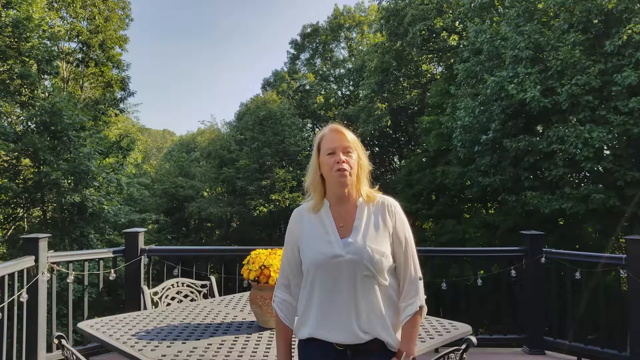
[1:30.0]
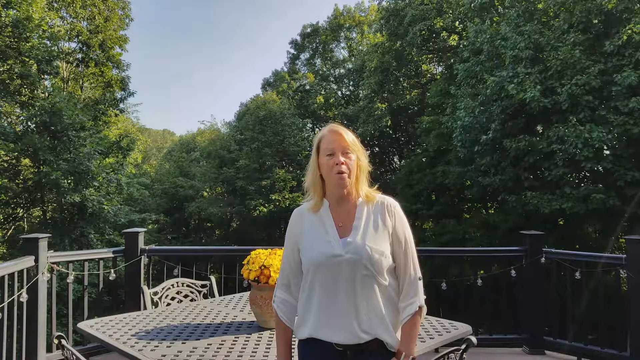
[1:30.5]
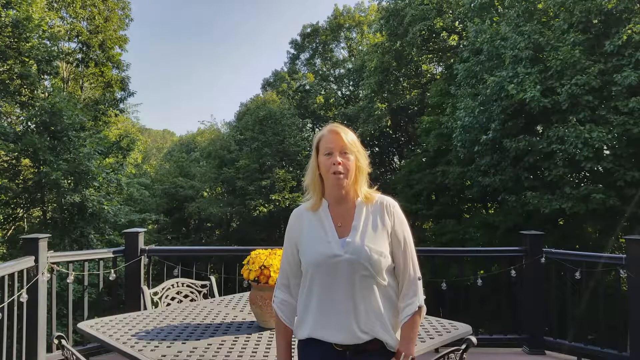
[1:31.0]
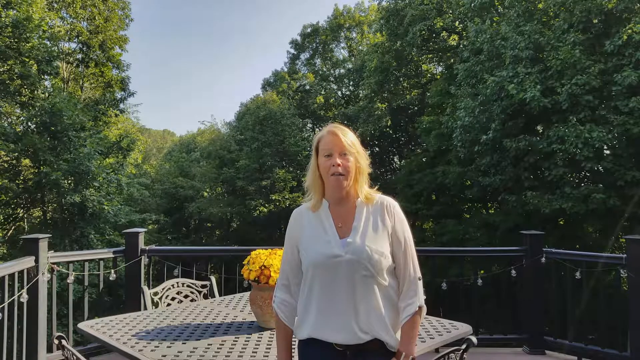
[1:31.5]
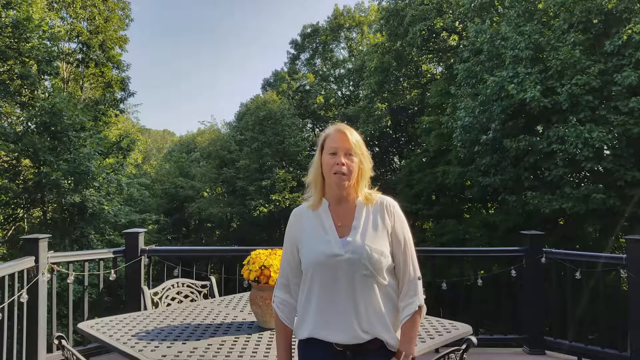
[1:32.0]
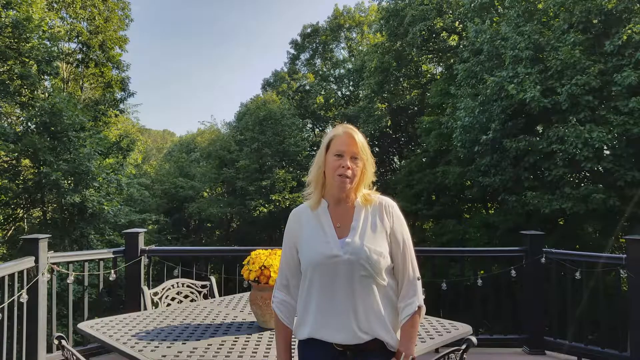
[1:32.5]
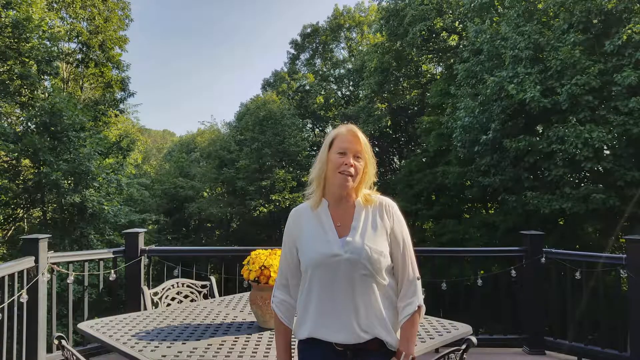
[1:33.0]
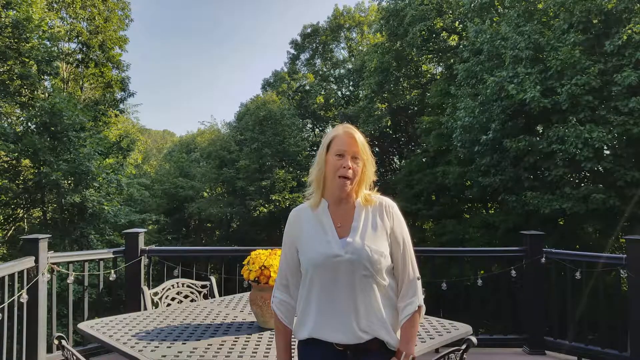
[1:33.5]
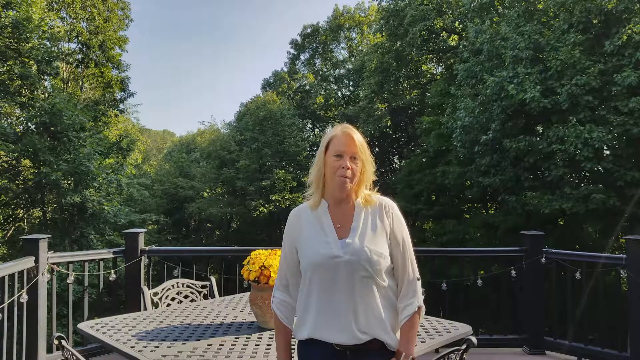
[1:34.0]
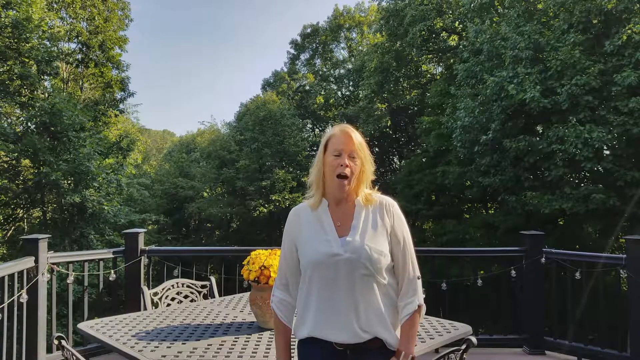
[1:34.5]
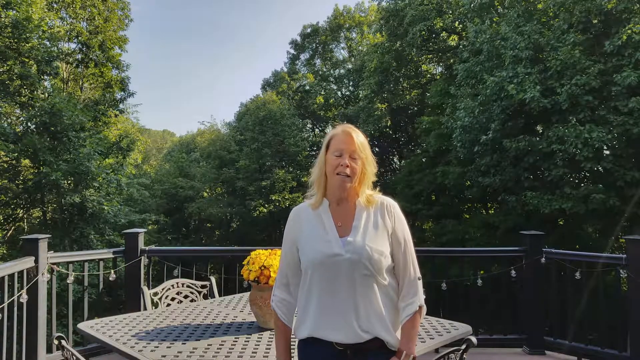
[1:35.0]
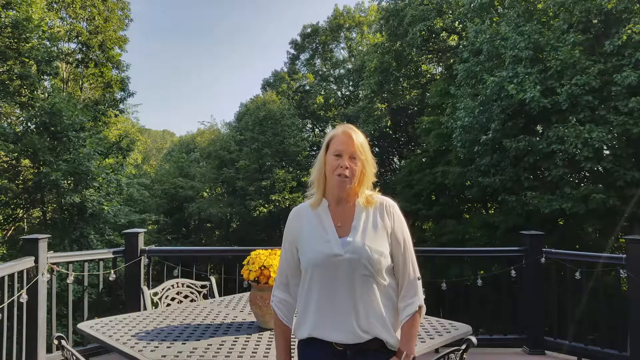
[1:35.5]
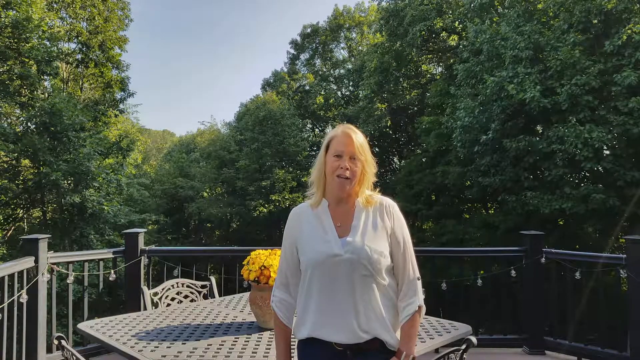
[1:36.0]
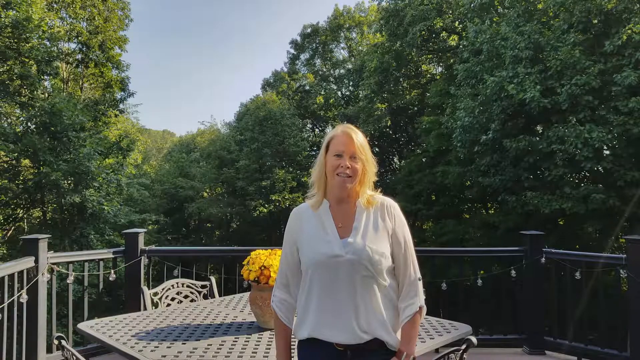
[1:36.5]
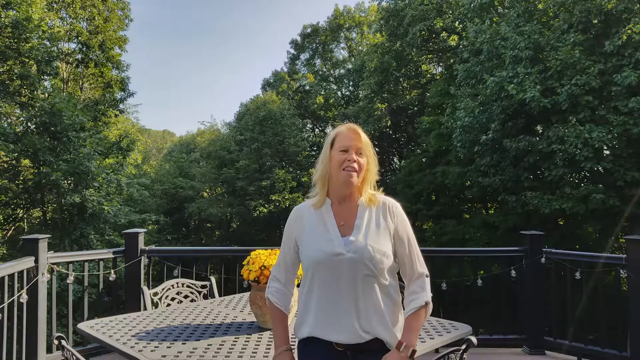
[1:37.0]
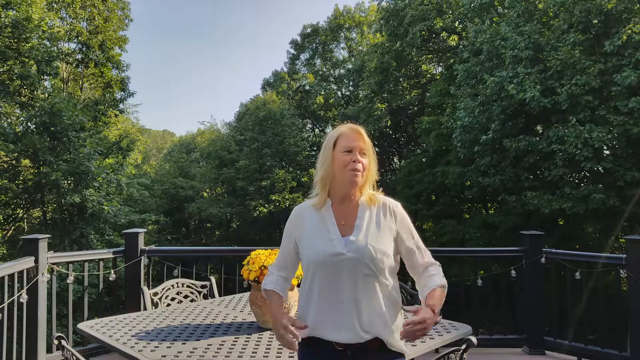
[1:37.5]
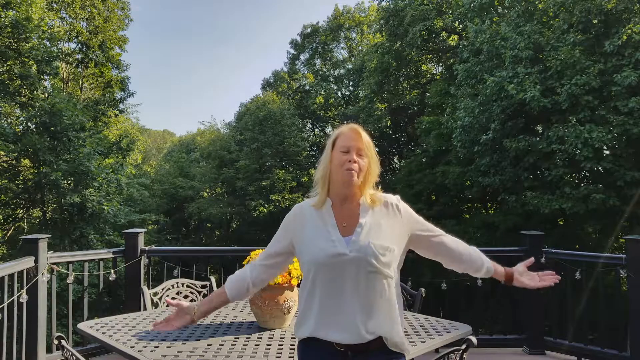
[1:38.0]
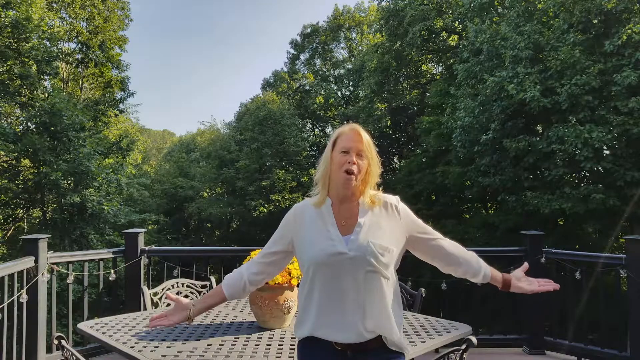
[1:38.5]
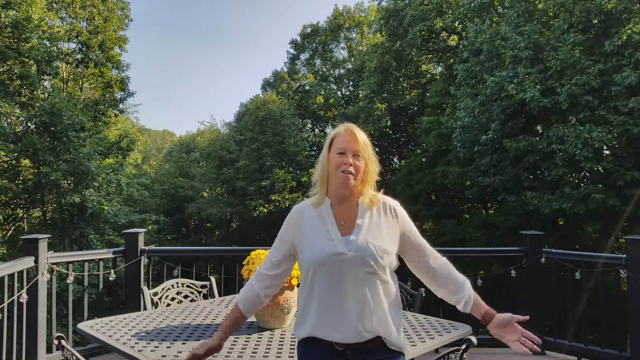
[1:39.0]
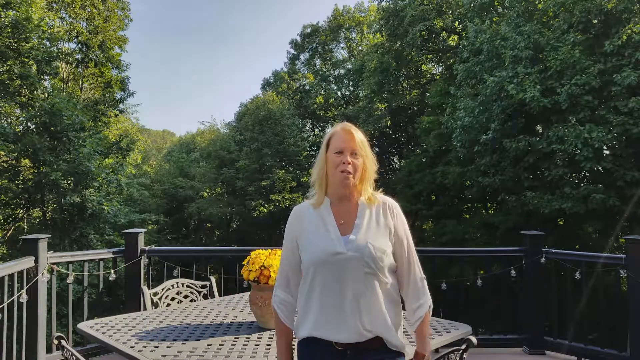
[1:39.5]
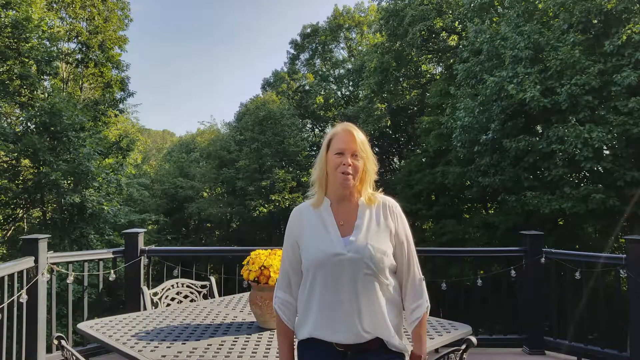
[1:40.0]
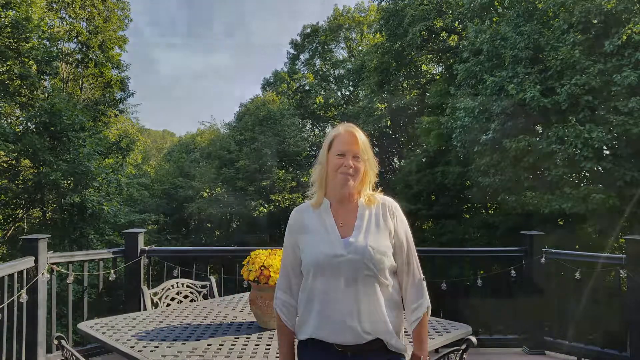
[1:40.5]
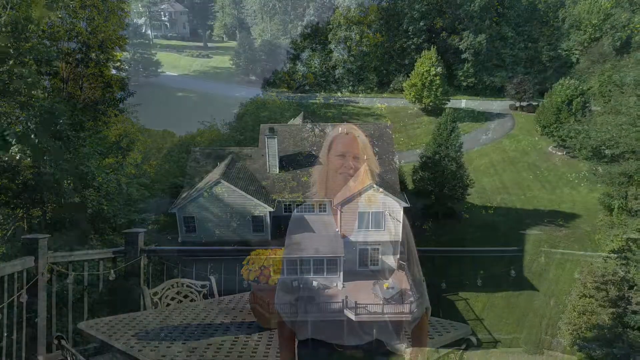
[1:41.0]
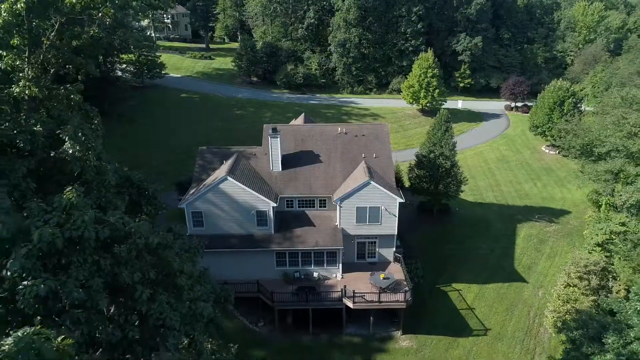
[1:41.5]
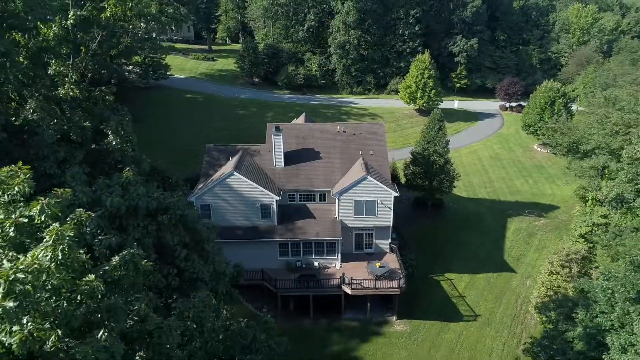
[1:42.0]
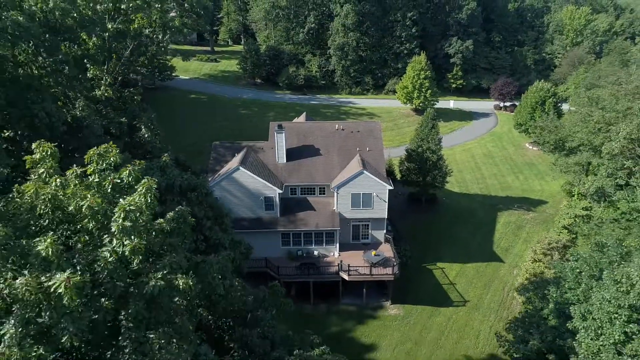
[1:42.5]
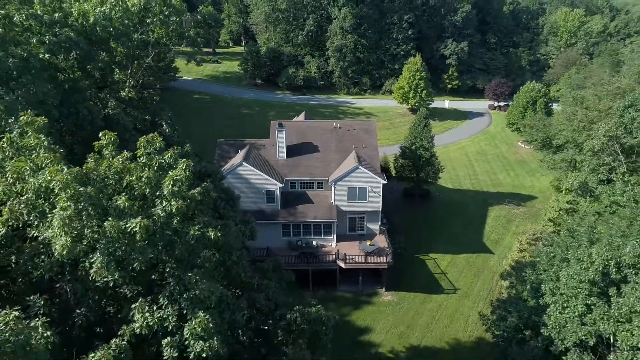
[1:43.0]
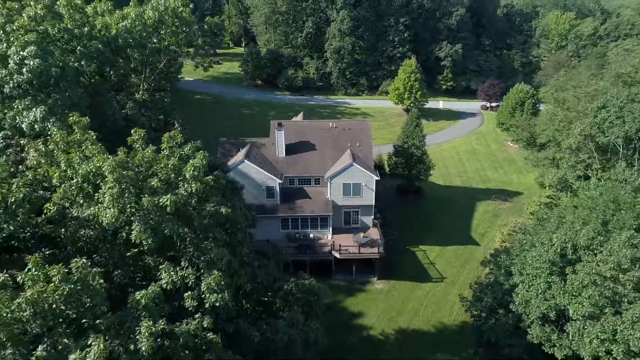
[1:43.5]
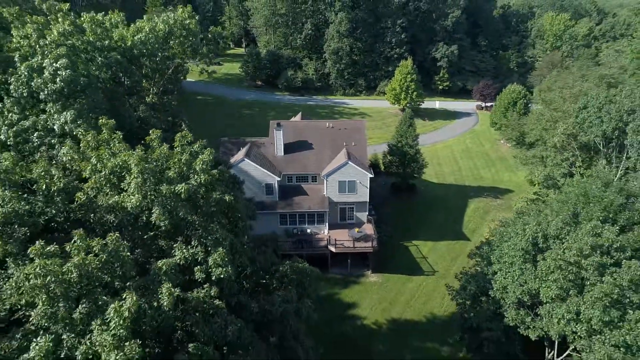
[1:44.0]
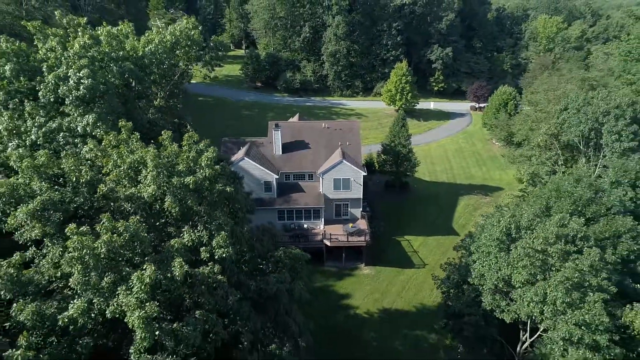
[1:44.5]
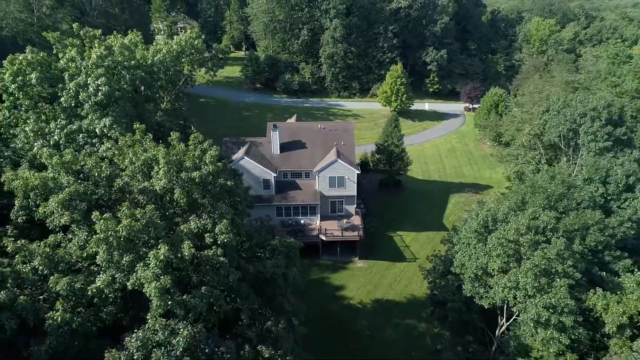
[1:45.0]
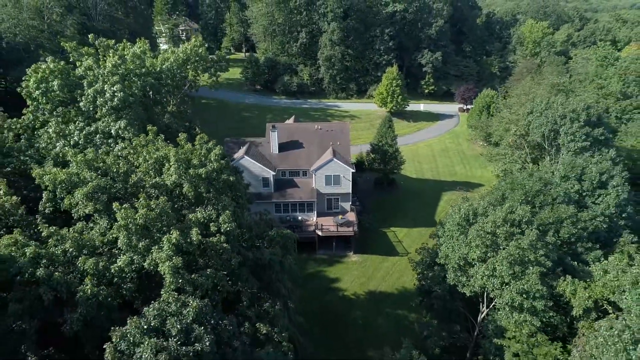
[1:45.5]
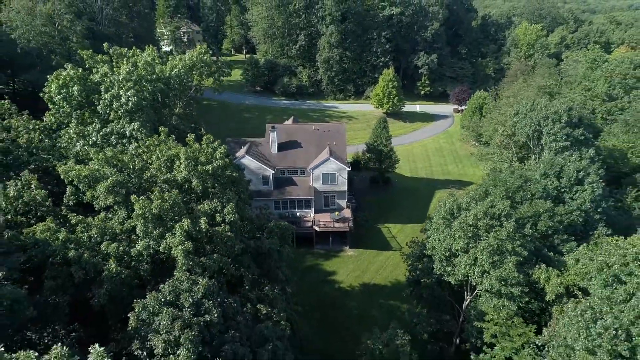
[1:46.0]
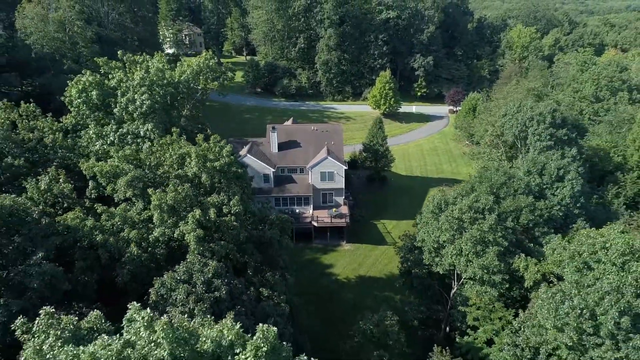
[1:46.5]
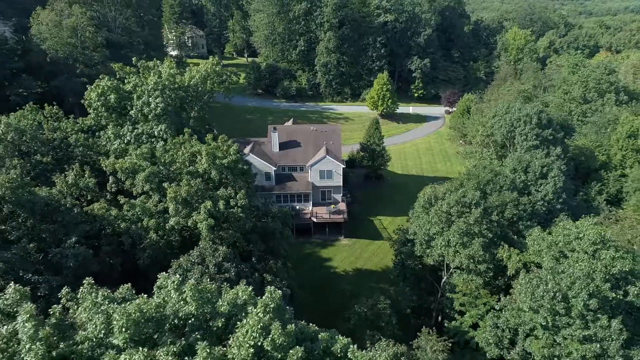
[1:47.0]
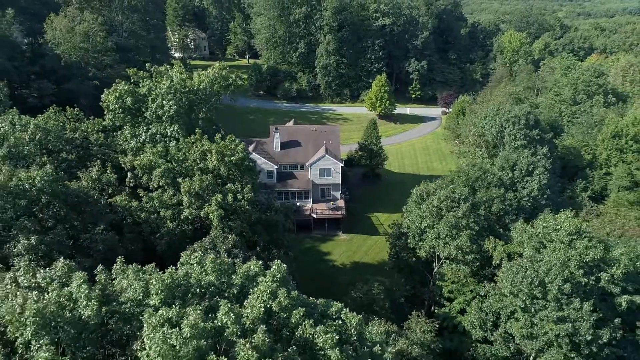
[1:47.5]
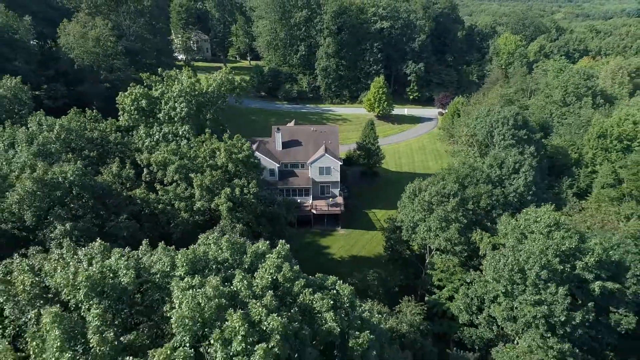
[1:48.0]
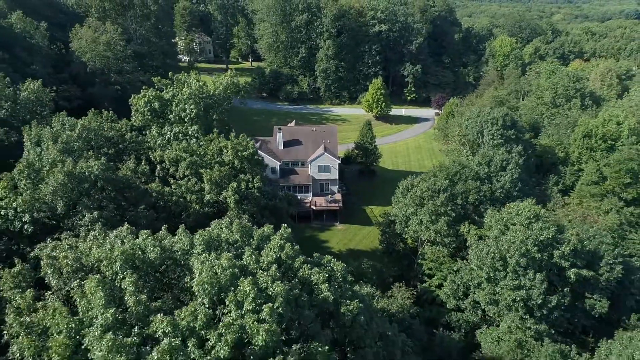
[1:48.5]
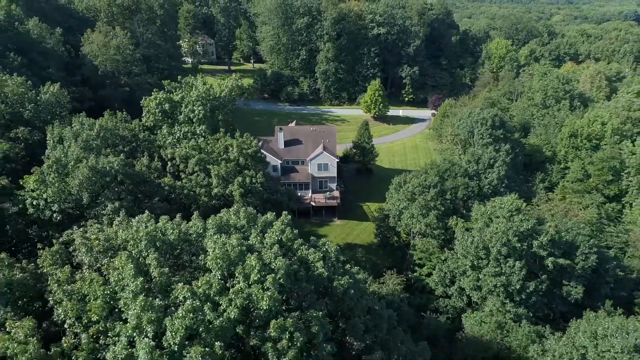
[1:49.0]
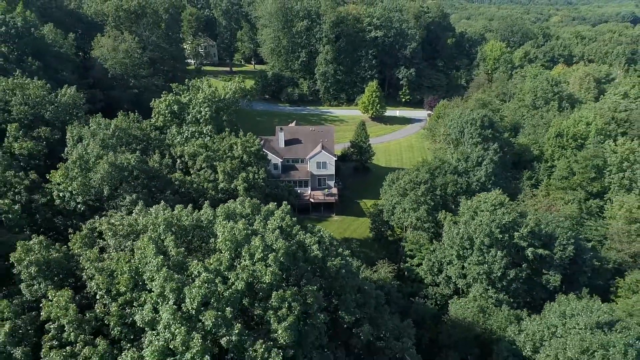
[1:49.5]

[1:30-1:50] The blonde woman in the white outfit and necklace is now speaking from the patio at the back of the house, standing in front of the table with the yellow flower. She may be a real estate agent, though she is not really dressed like one. A drone view then pans out over all the trees, making the house look smaller the higher or further away the drone goes; a road and the round driveway are still visible. The house is a millionaire's home. The footage fades back to the woman speaking; she wears no glasses, almost no makeup, and brown wristbands. Some of the trees seem to be evergreens and look almost Christmassy. On the left side of the house, the right side of the screen, there are a lot of trees. The sunlight shining through suggests morning or afternoon.